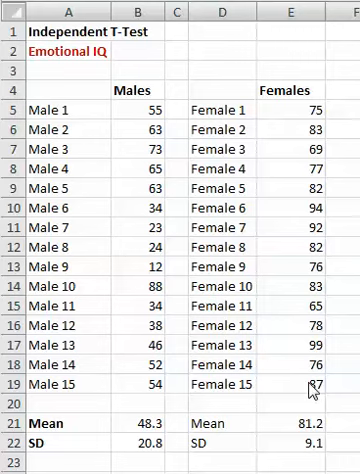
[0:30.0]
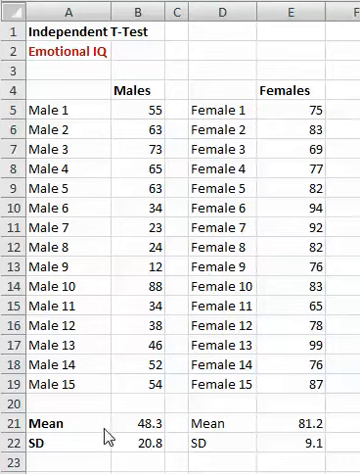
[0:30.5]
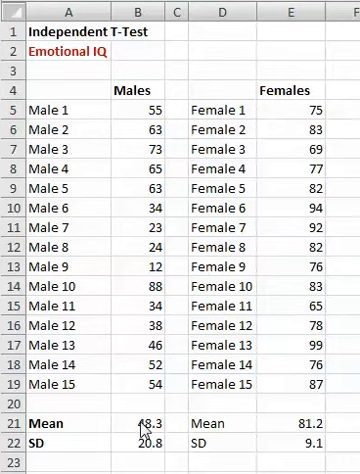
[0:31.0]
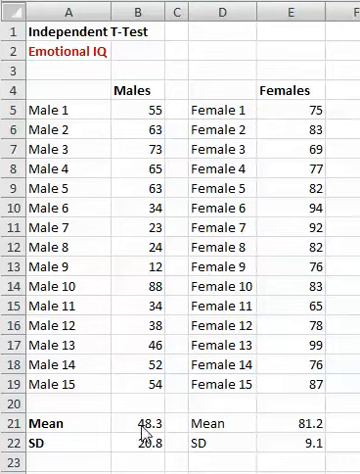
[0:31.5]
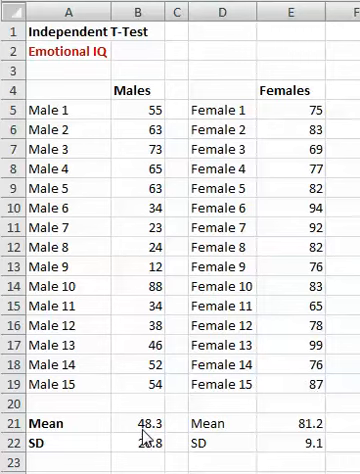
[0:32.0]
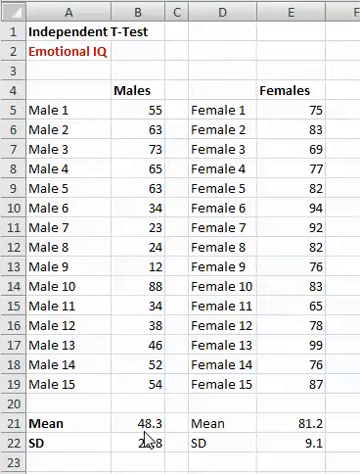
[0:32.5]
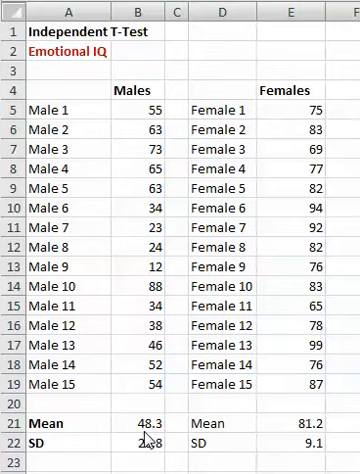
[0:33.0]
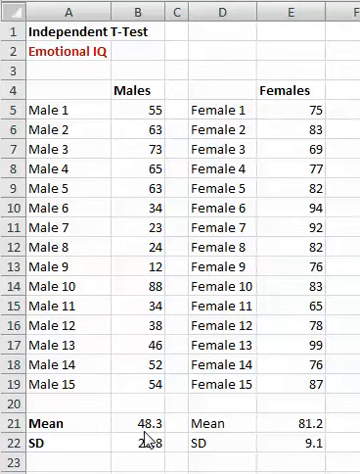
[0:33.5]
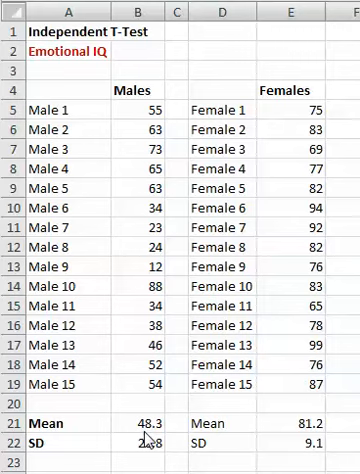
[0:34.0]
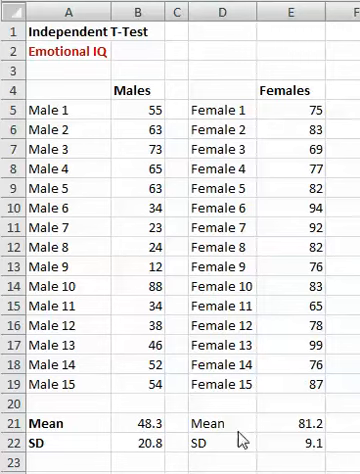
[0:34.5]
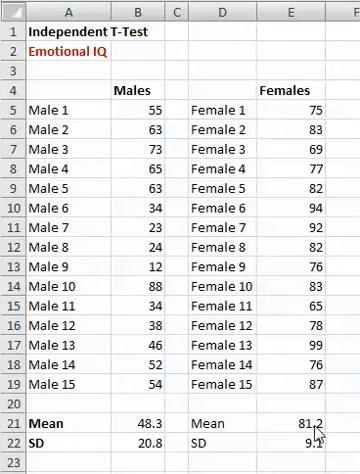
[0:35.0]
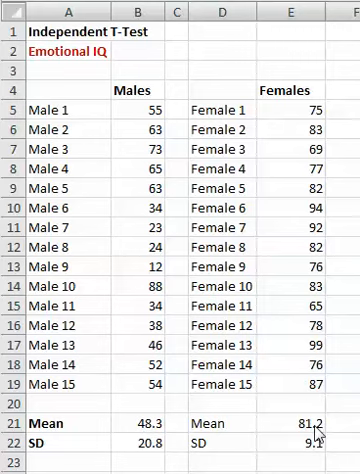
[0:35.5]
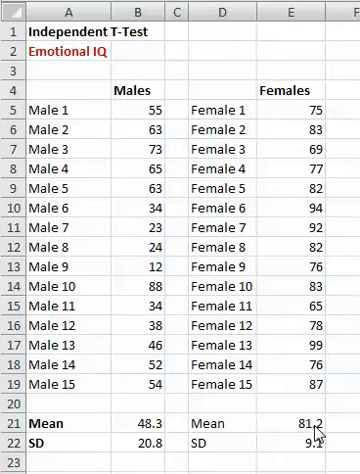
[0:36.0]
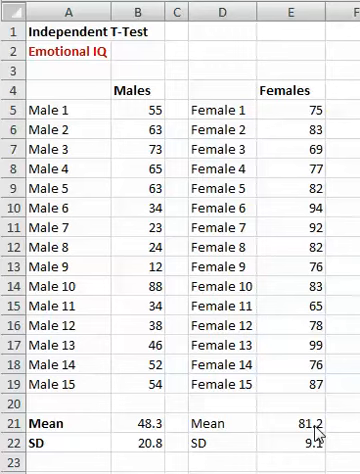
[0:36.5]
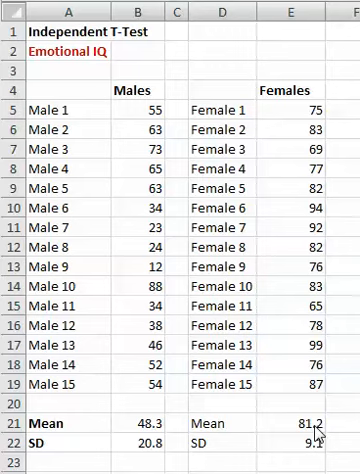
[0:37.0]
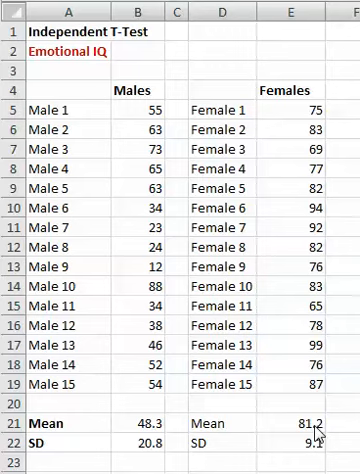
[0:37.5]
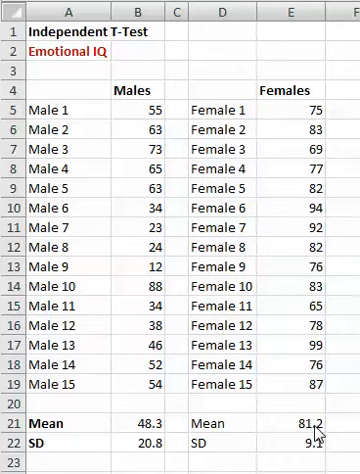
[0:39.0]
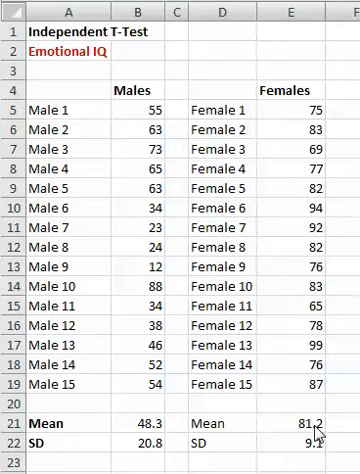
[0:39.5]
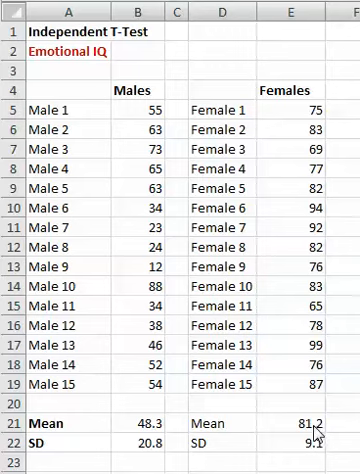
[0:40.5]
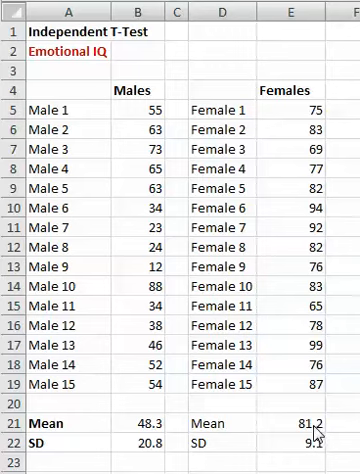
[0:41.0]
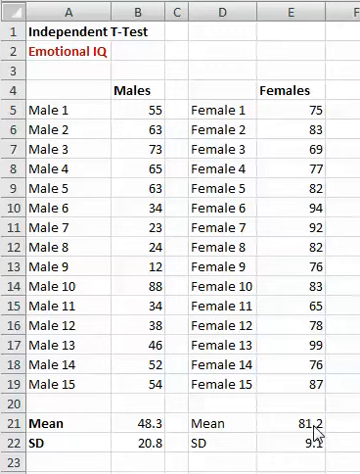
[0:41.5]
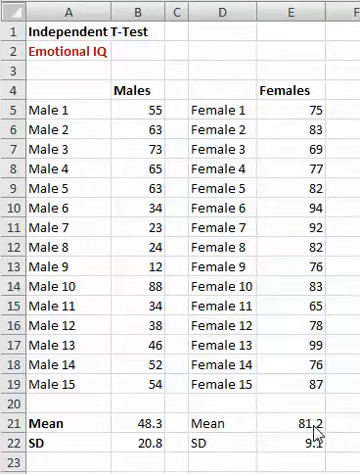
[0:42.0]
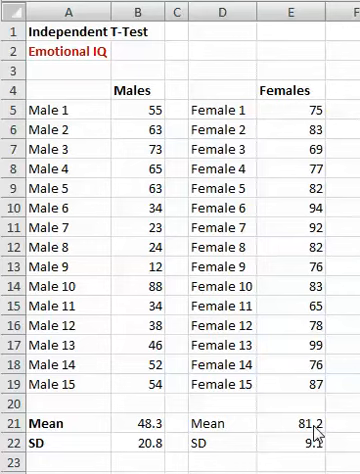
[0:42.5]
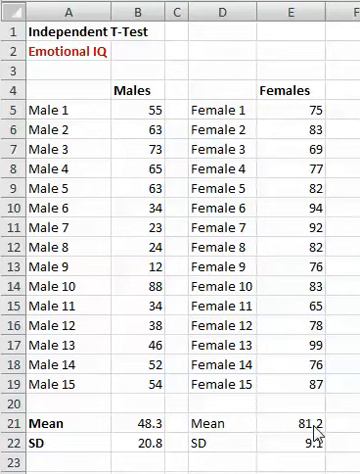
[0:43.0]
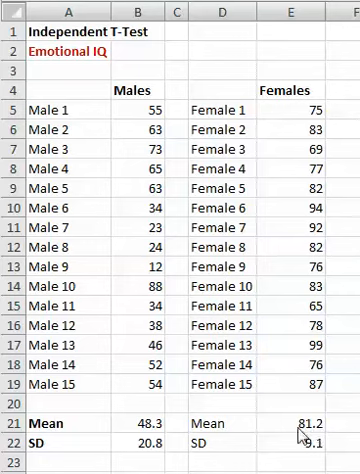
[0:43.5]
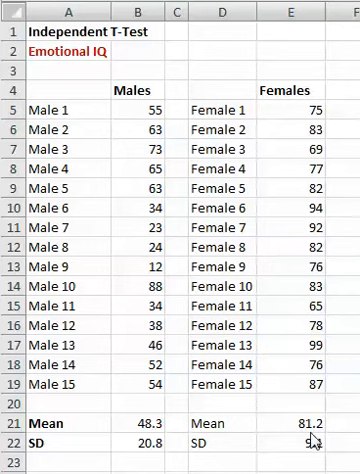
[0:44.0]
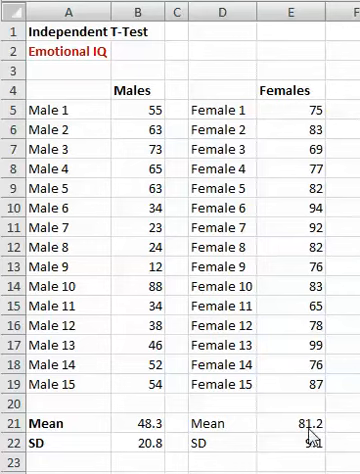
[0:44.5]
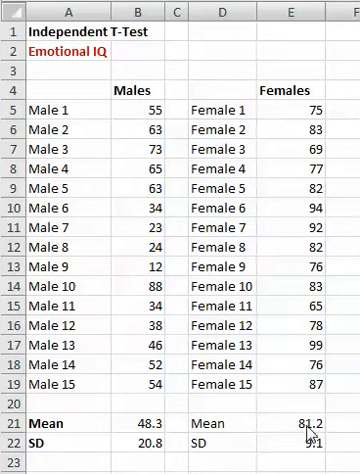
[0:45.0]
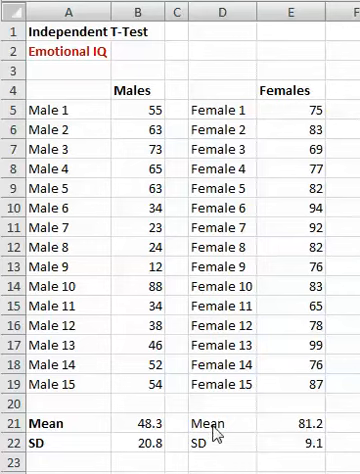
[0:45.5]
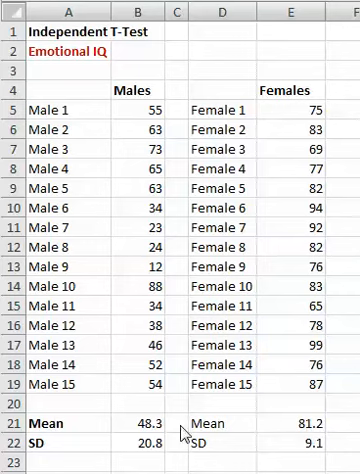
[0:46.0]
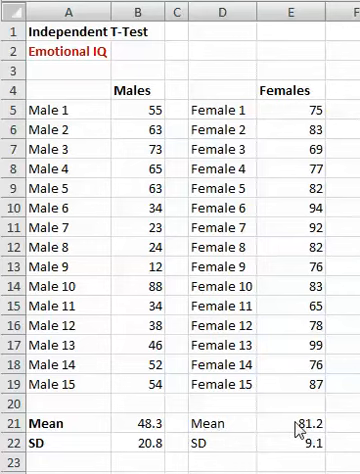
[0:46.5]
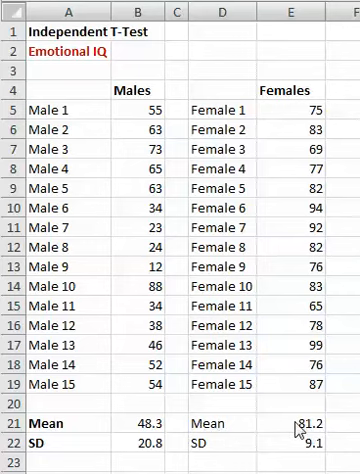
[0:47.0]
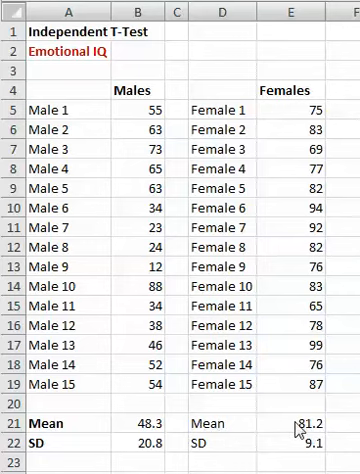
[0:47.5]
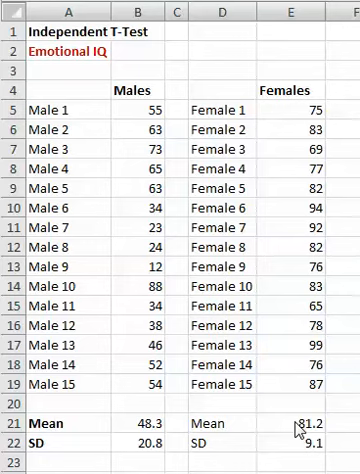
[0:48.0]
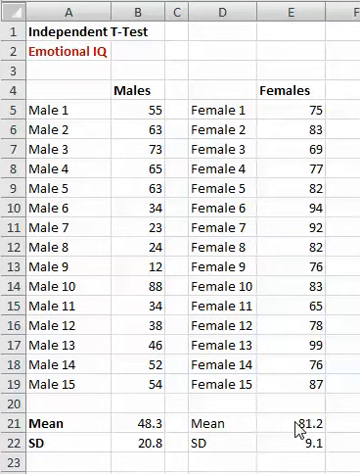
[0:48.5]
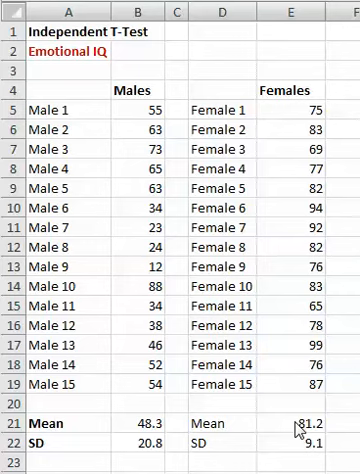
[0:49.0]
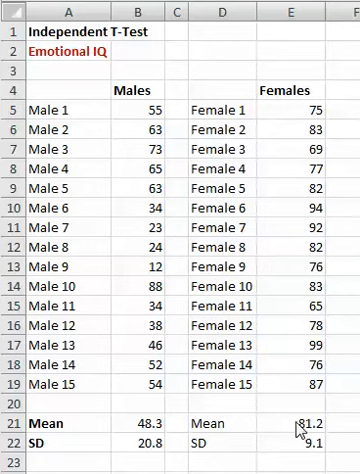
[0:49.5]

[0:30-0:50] An Excel table is shown, apparently in Microsoft Excel, with the mouse cursor running through some of its cells. The table is called "independent test Emotional IQ" and has cells for males and females. Males 1 through 15 are listed with values 55, 63, 73, 65, 63, 44, 23, 24, 12, 88, 34, 38, 46, 52 and 54, with a mean of 48.3 and an SD of 20.8. Females 1 through 15 are listed with values including 83, 69, 77, 82, 94 and 92, and their mean is 81.2 with an SD of 9.1.